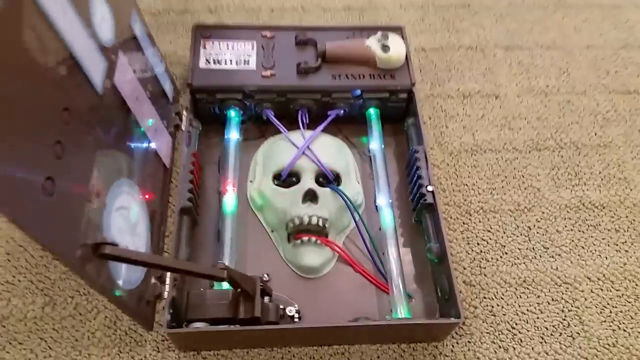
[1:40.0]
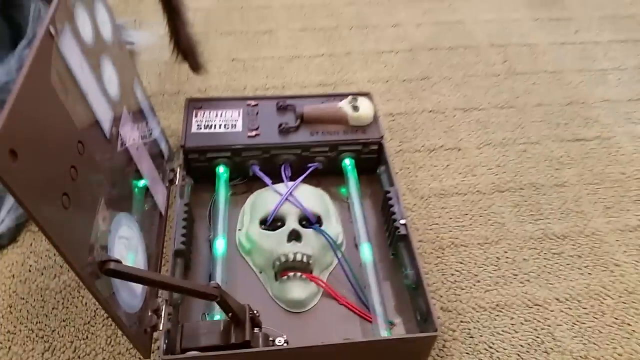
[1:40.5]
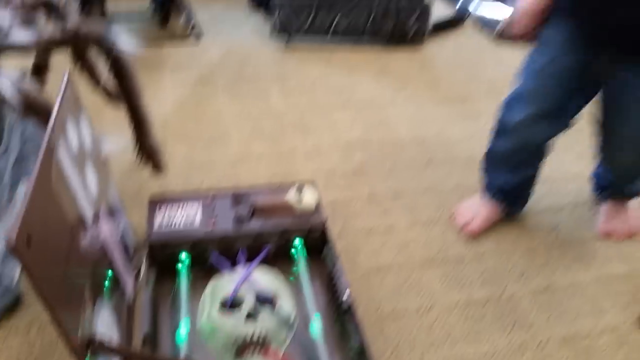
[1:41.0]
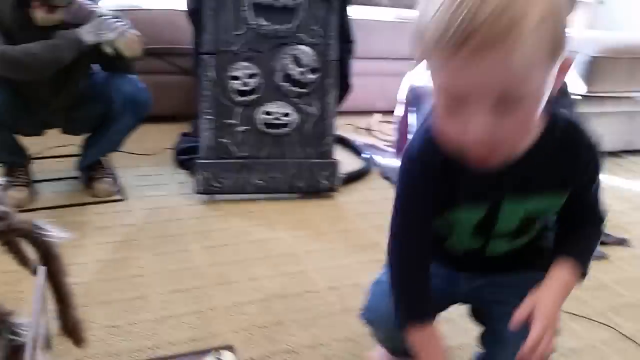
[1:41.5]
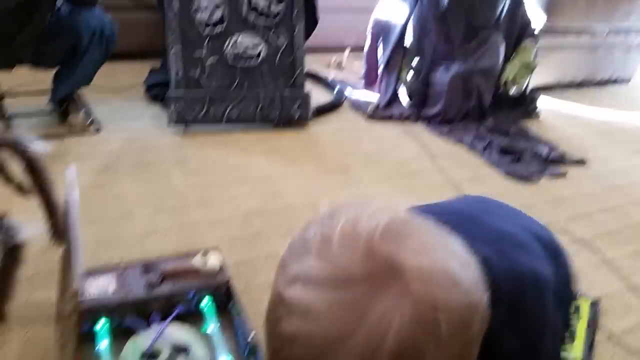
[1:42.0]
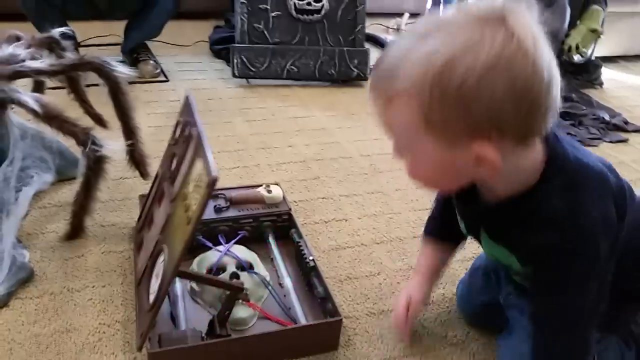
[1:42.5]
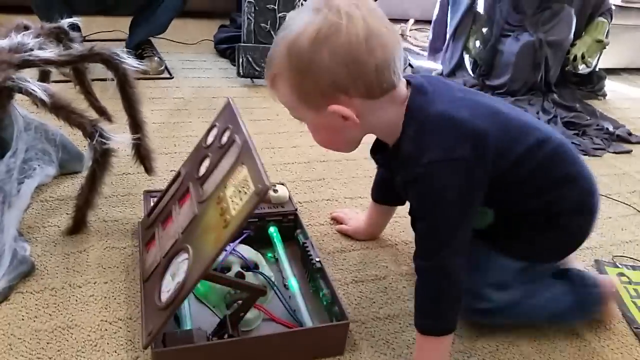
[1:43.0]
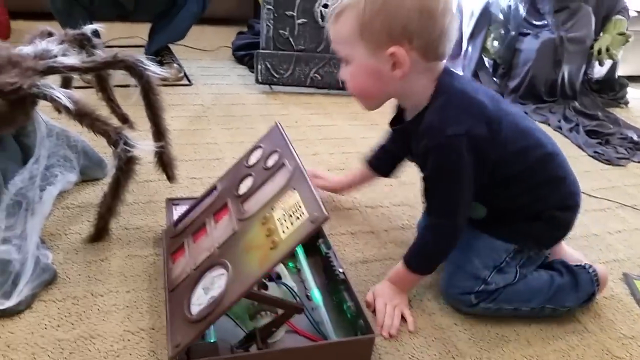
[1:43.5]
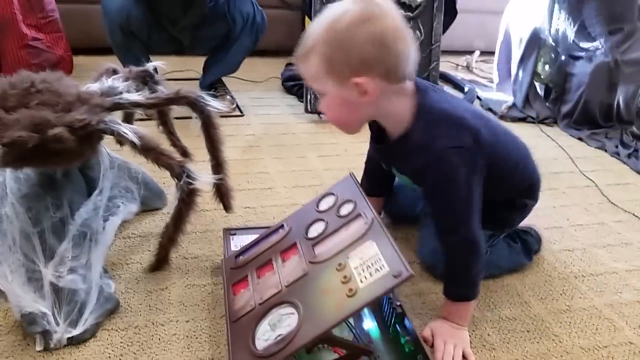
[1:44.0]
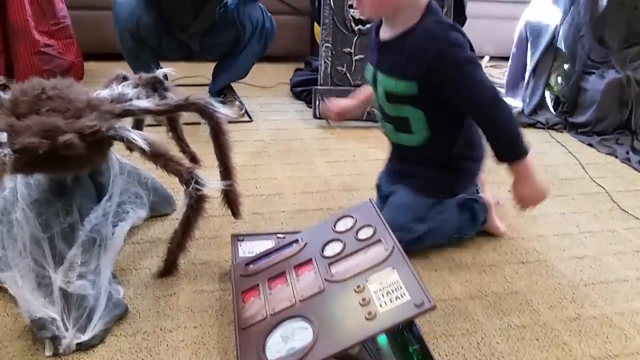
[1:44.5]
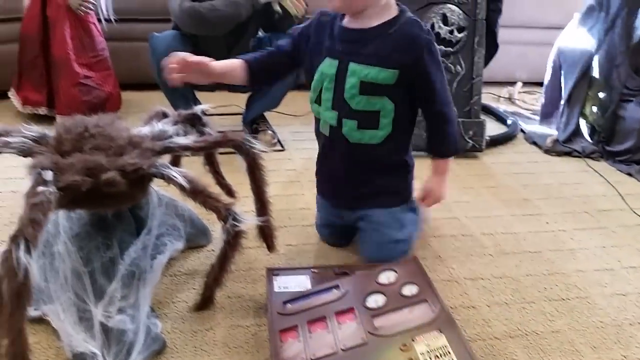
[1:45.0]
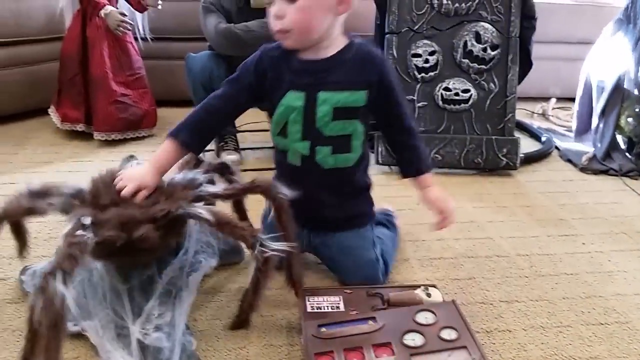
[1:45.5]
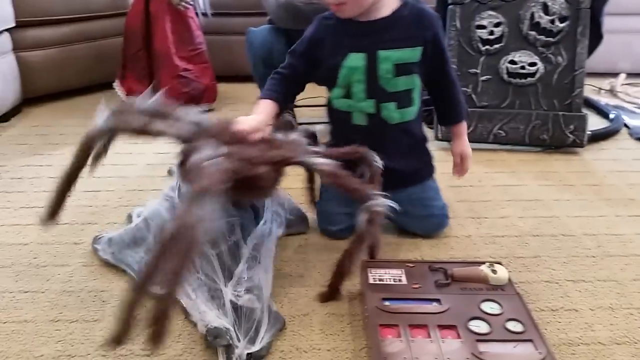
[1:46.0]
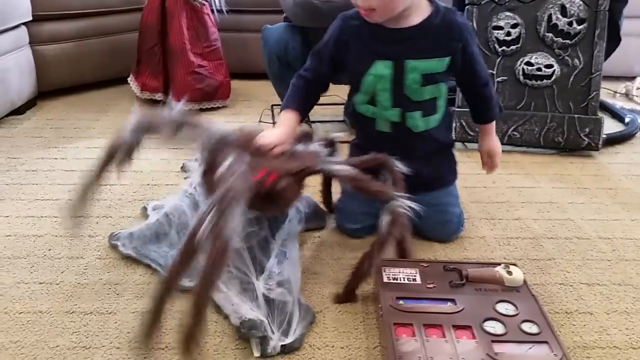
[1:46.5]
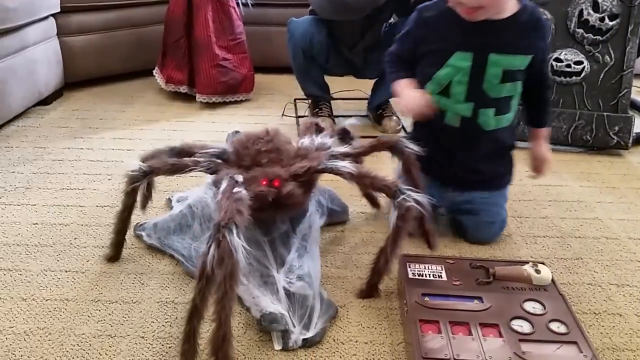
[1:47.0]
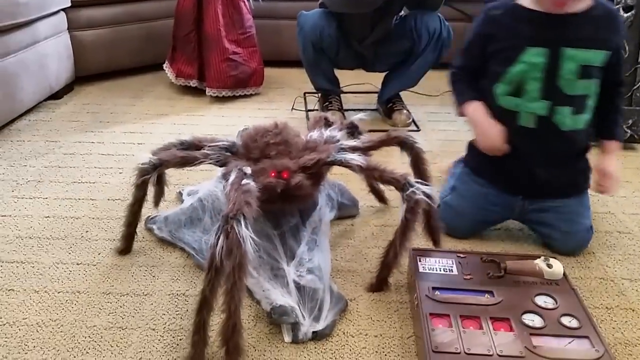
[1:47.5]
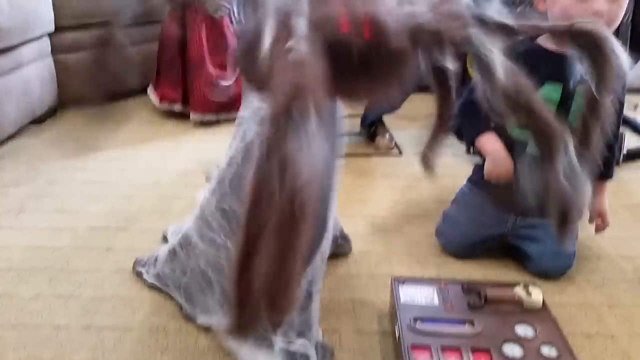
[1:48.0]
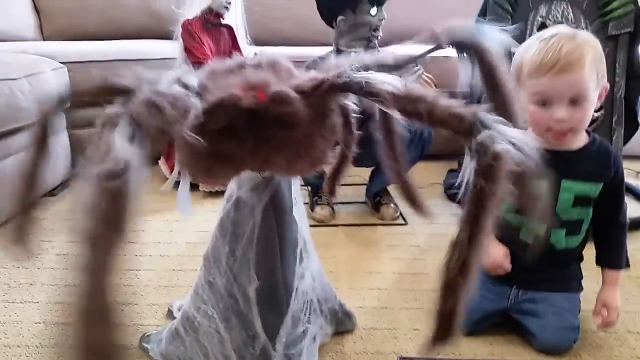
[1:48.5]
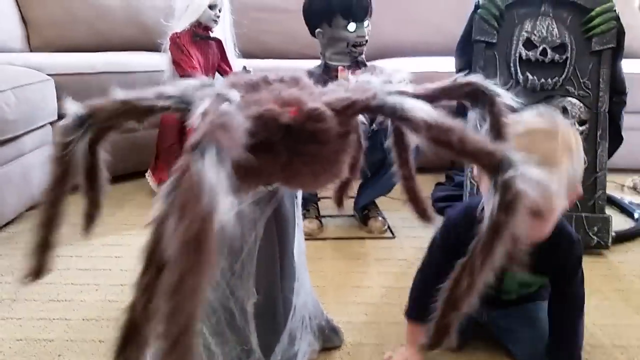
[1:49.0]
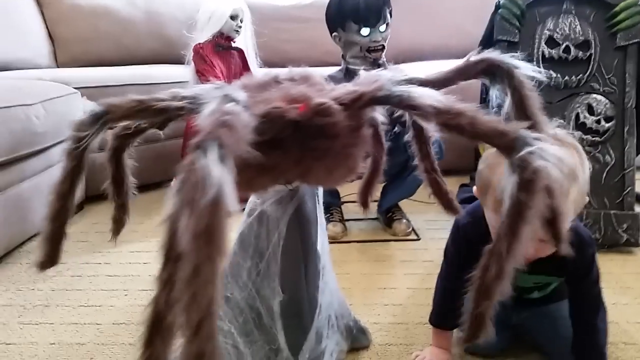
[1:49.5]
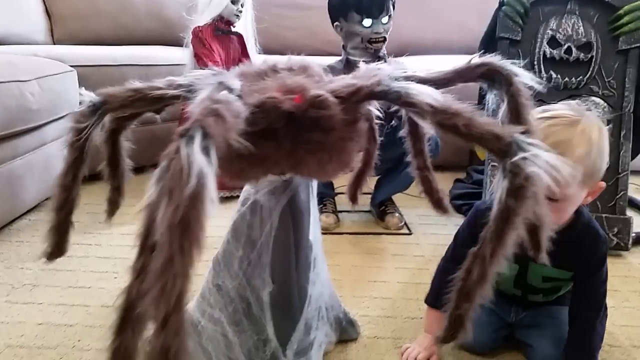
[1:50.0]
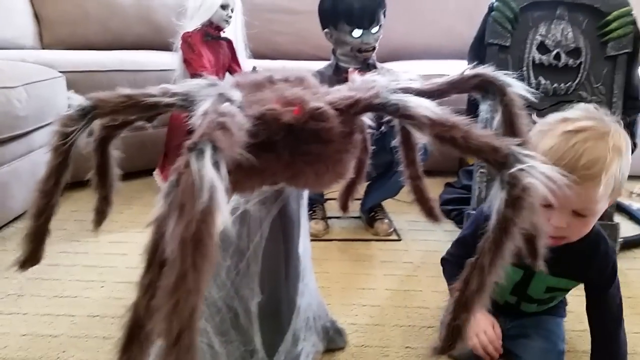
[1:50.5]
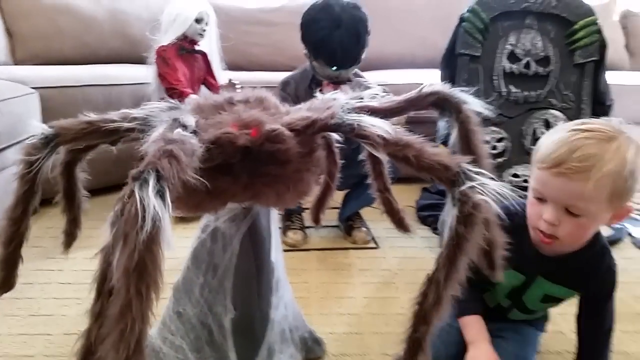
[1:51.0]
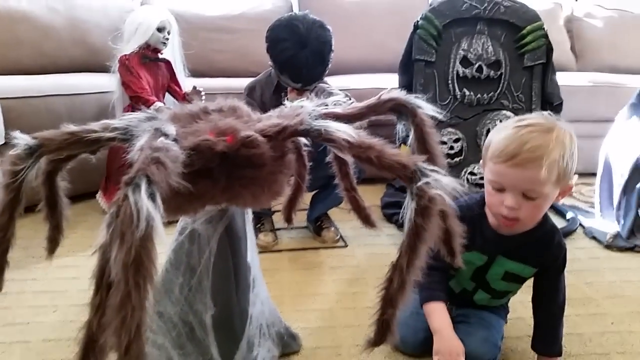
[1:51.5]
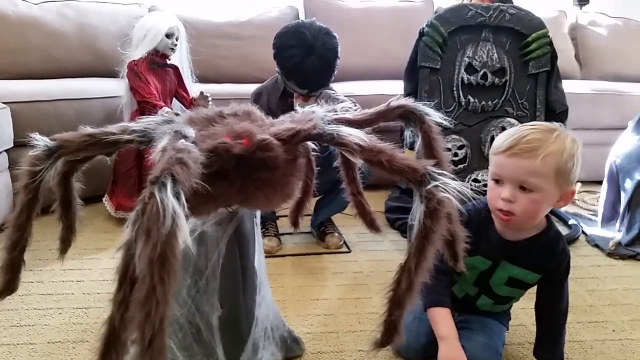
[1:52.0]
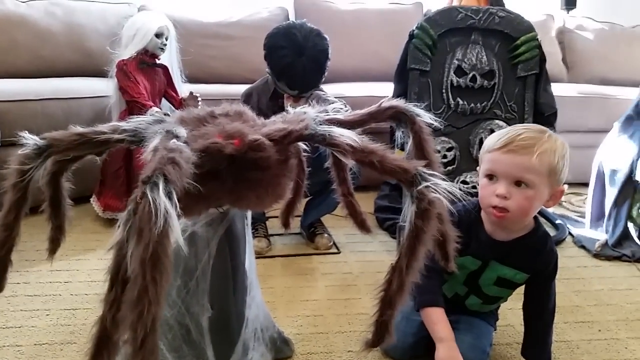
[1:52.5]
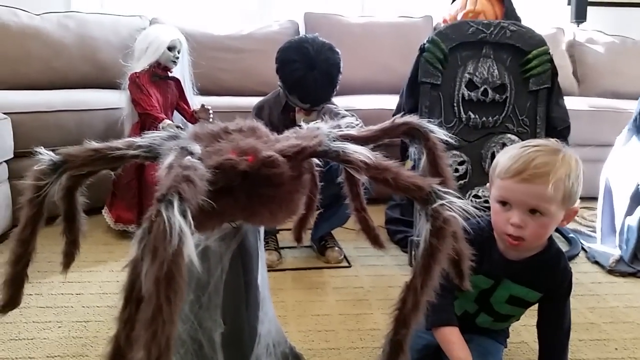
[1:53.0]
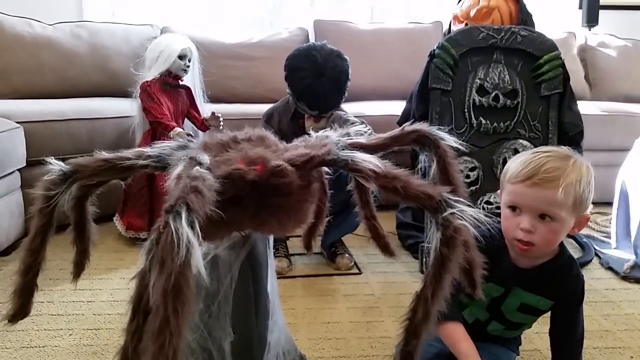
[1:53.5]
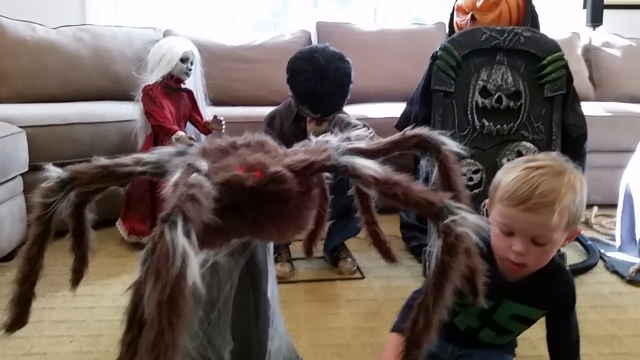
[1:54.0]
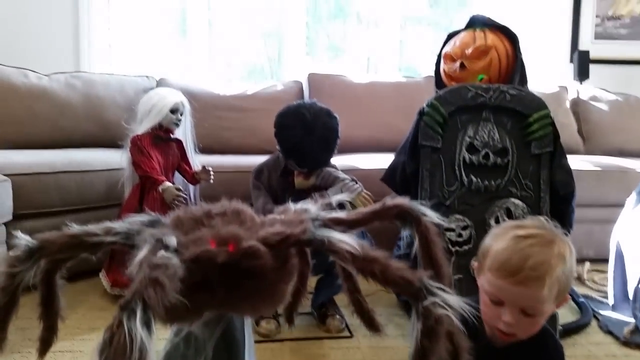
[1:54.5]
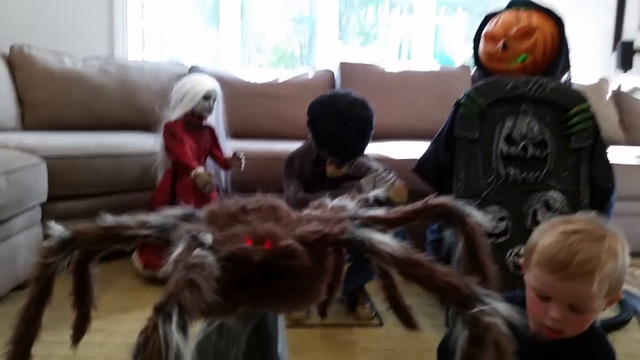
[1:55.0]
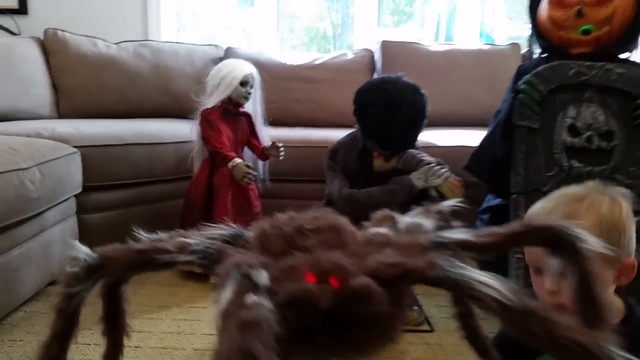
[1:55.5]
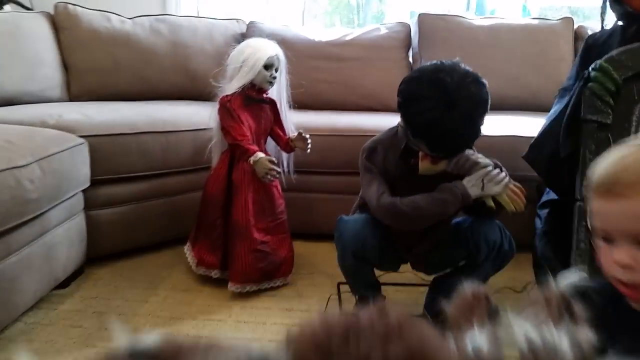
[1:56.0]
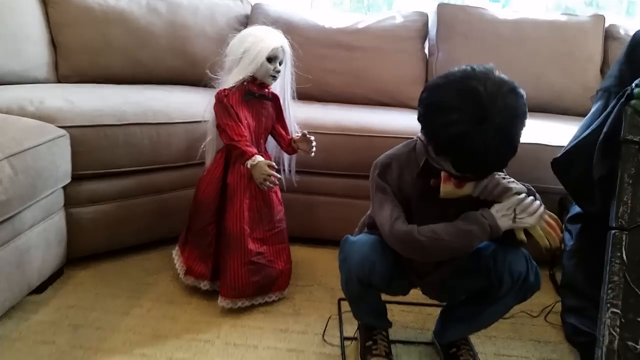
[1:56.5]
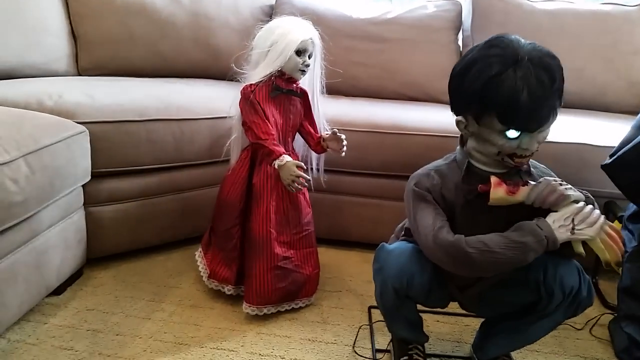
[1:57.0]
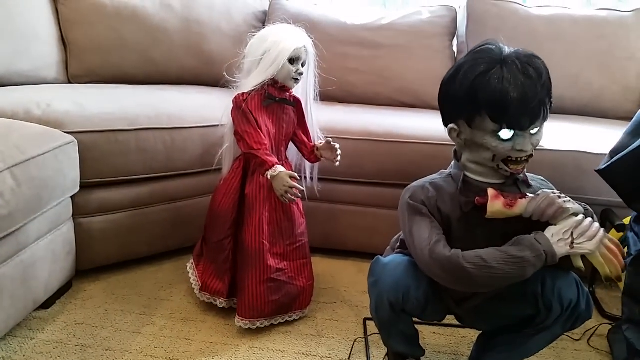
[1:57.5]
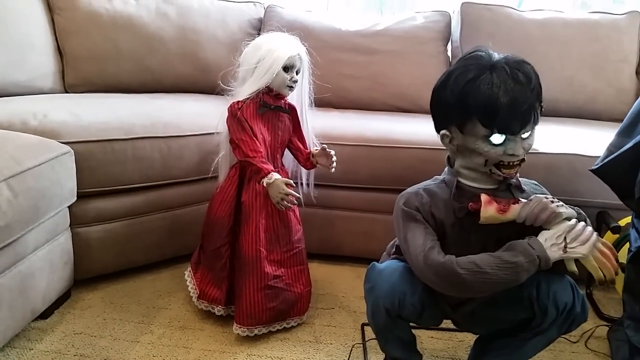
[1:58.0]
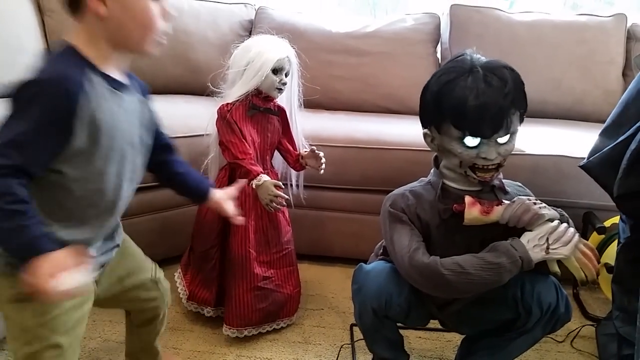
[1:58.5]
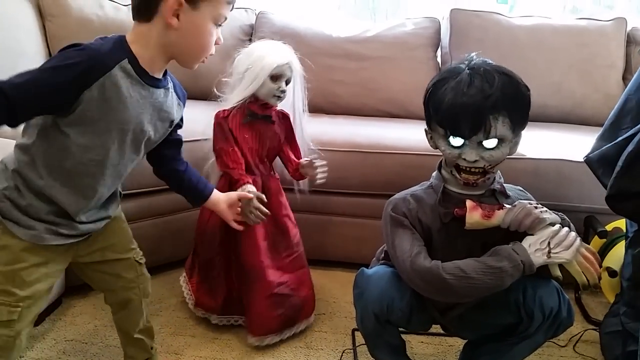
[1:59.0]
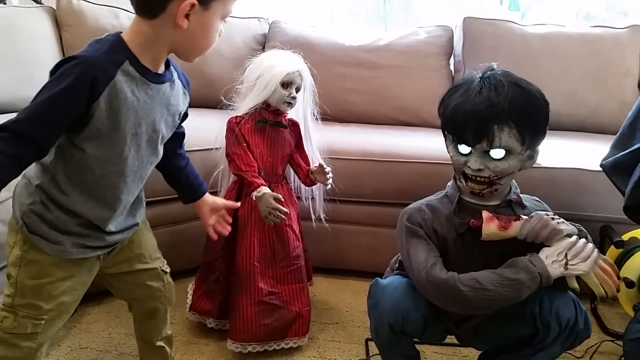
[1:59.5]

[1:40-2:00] The little boy with the navy blue shirt and blonde hair has the number 45 in green on his shirt. He grabs the top of the tarantula and shakes it, and peeks inside the box. He then goes to the doll with the long white hair in the back and scooches her around a little so her face is more visible. She has an almost lifelike, childlike face that is white like a zombie, with dark eyes and long white hair, and her dress looks Victorian in style, coming up to cover her neck. The little boy is quite rambunctious with the decorations. In the background, the dark-haired animatronic boy lifts his head up and down; he is holding a faux arm and appears to be eating it, with a bite taken out of the arm and bloodiness visible.